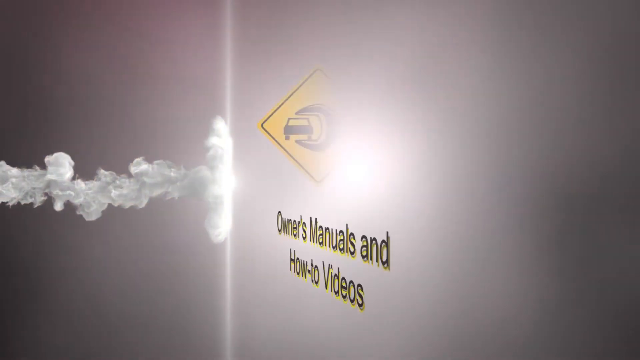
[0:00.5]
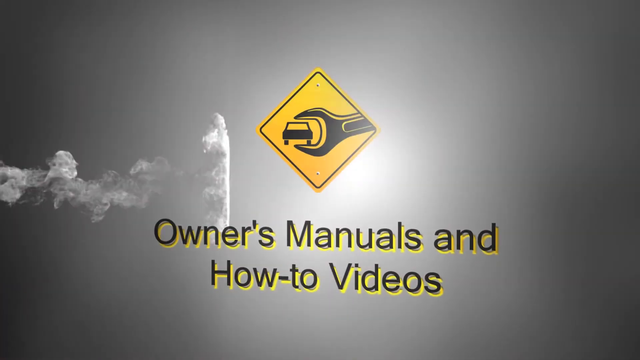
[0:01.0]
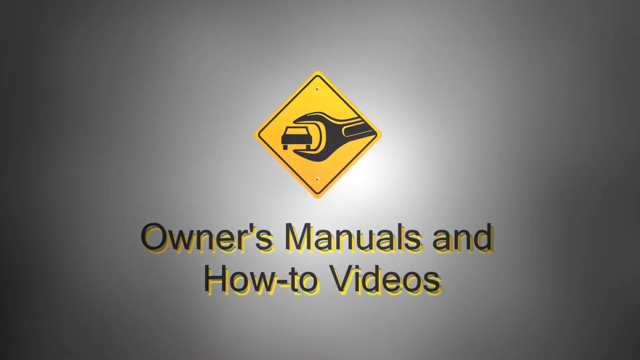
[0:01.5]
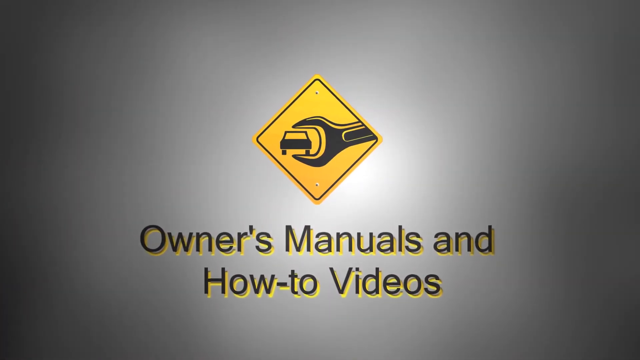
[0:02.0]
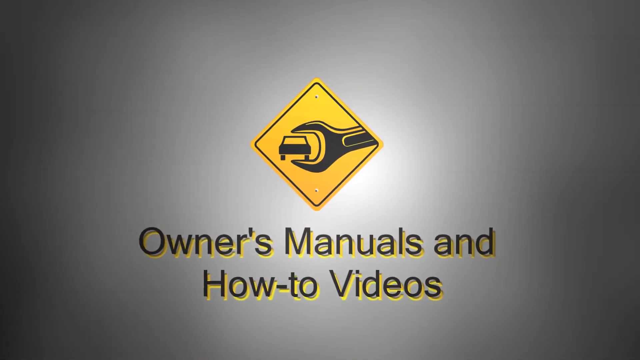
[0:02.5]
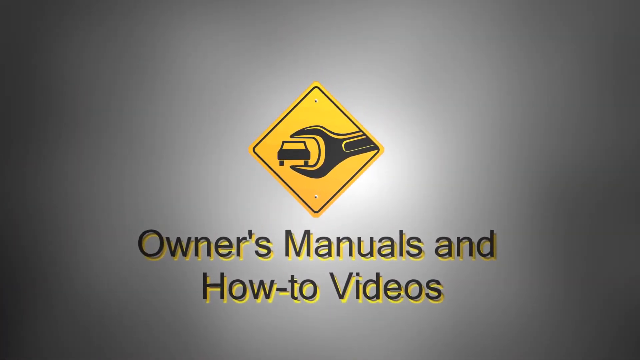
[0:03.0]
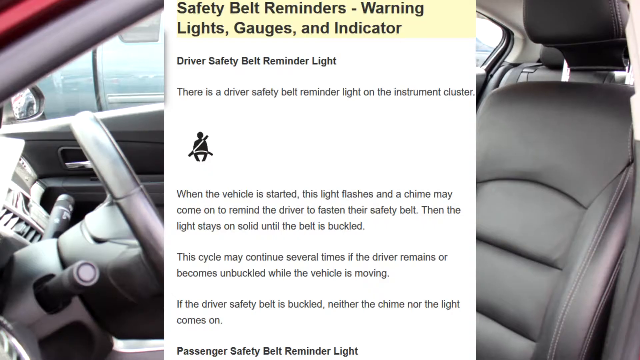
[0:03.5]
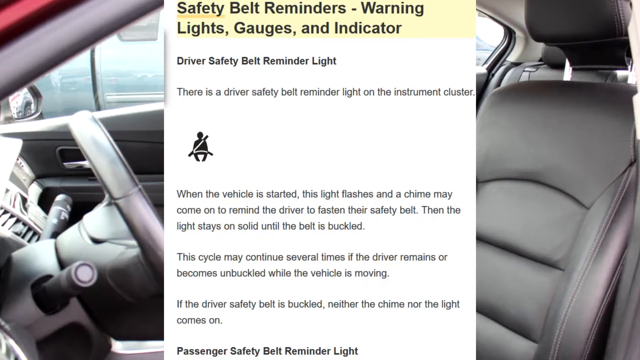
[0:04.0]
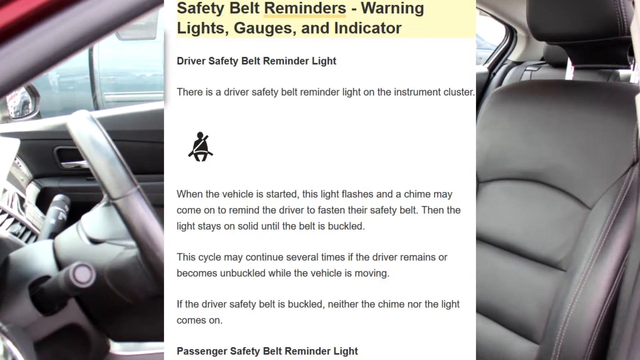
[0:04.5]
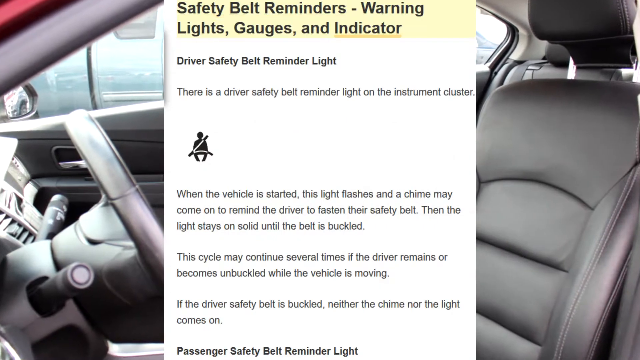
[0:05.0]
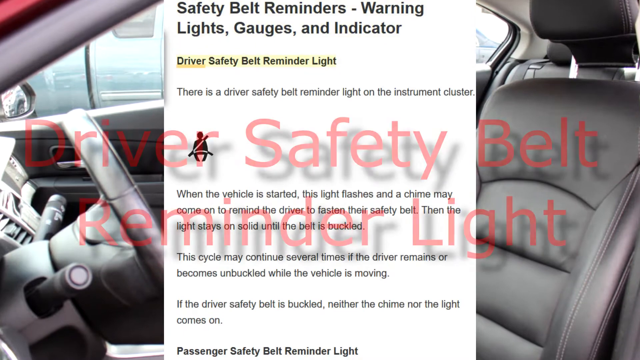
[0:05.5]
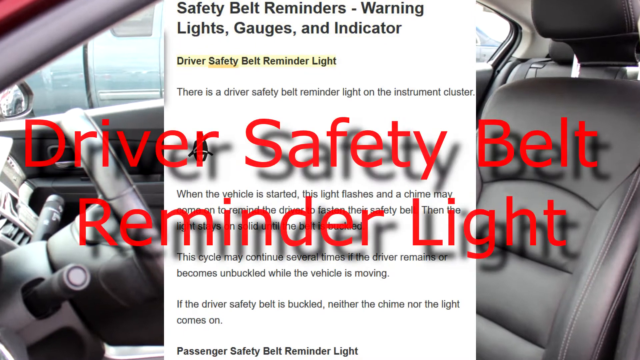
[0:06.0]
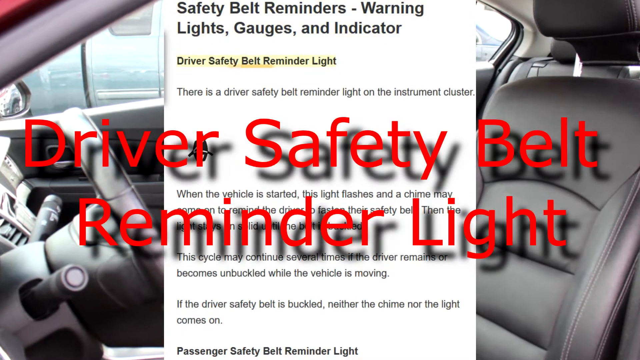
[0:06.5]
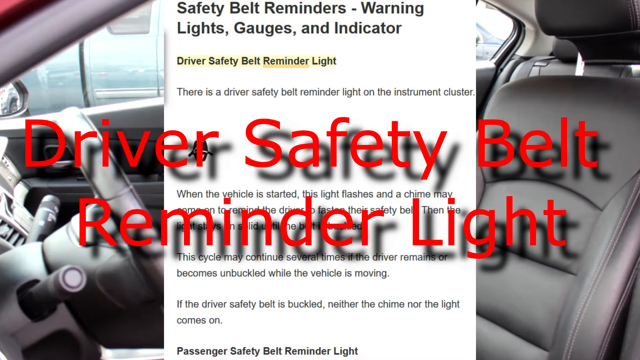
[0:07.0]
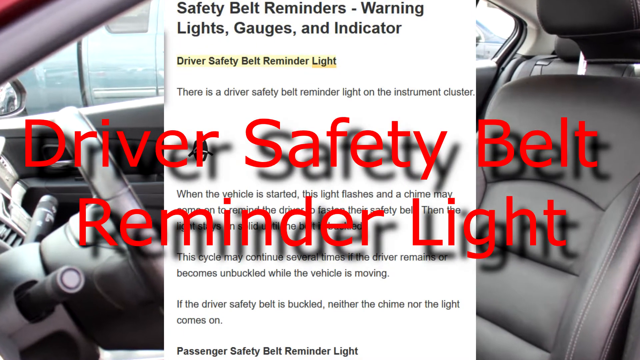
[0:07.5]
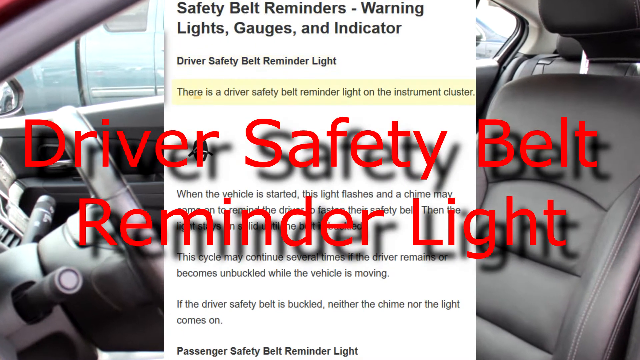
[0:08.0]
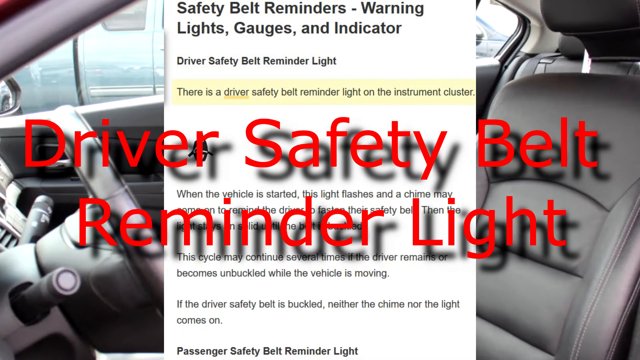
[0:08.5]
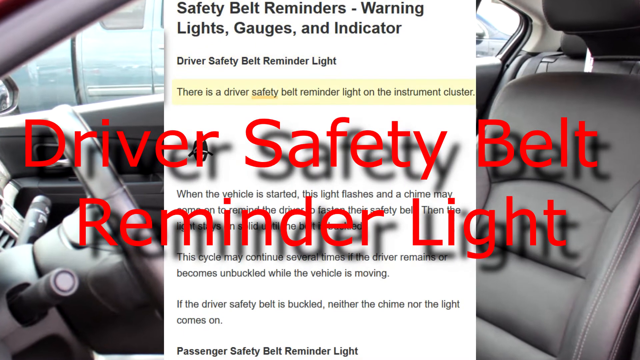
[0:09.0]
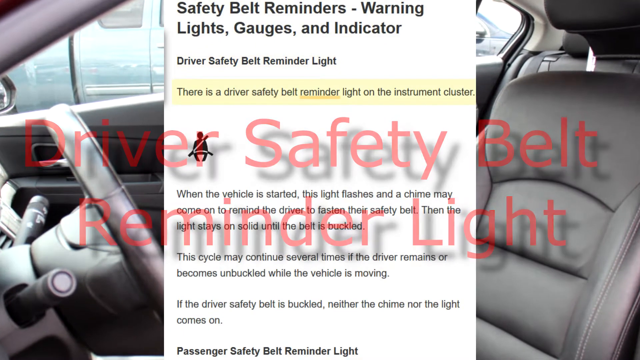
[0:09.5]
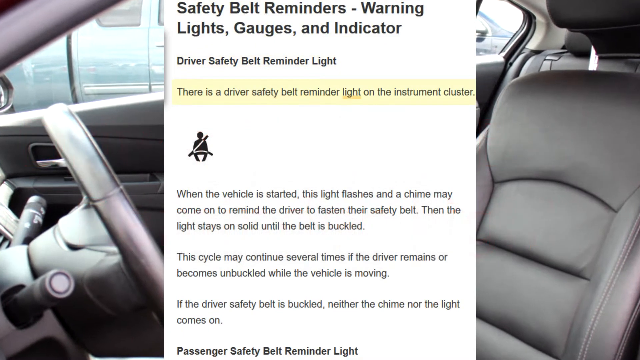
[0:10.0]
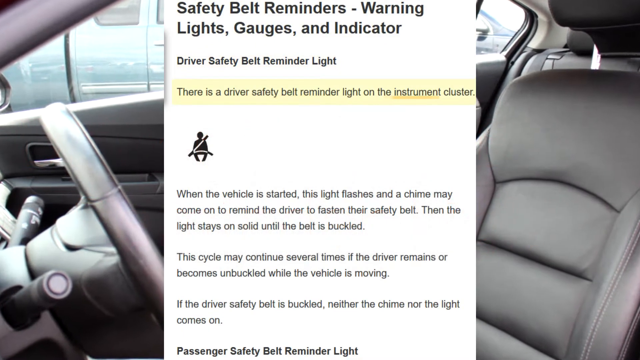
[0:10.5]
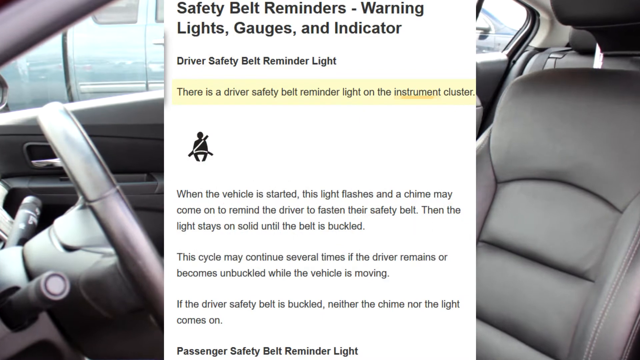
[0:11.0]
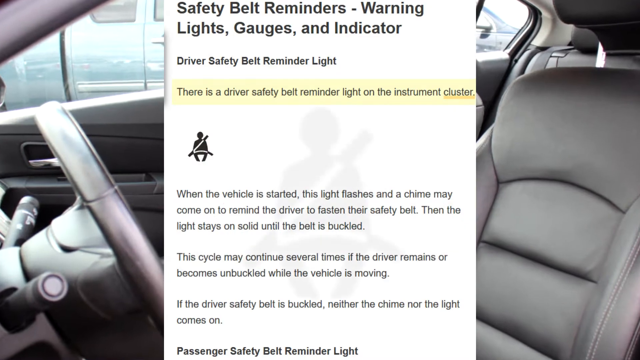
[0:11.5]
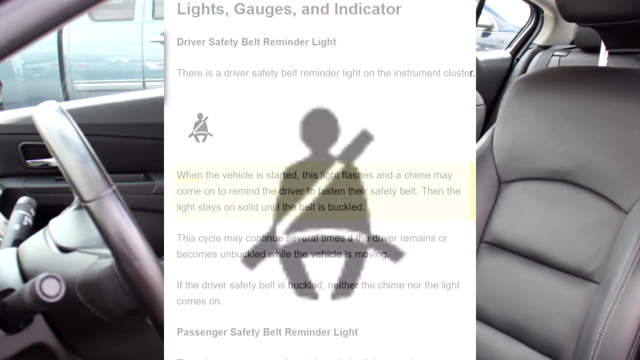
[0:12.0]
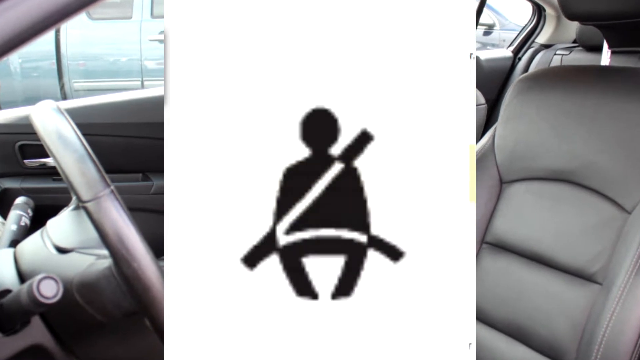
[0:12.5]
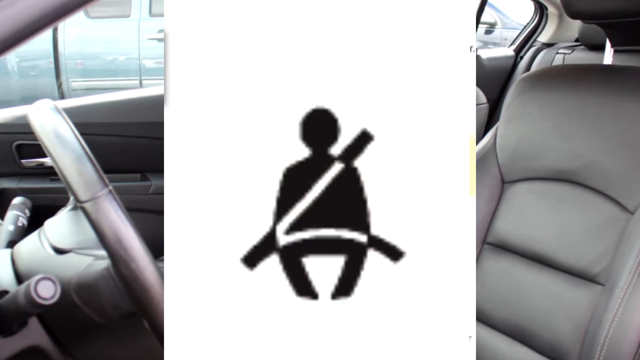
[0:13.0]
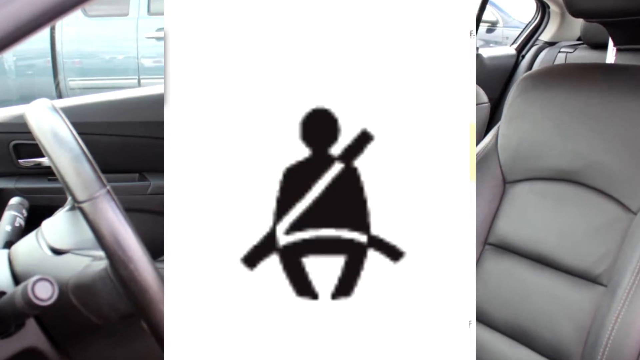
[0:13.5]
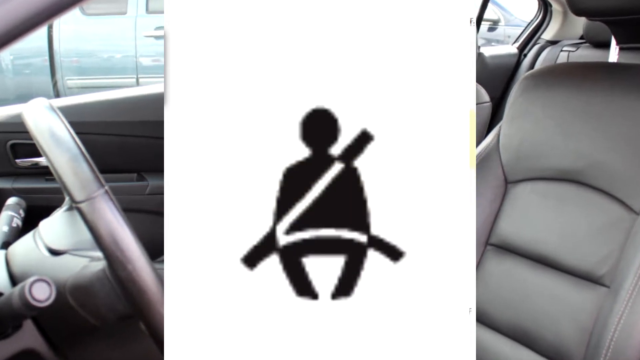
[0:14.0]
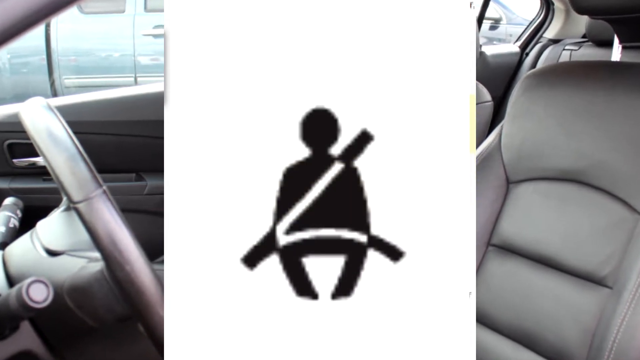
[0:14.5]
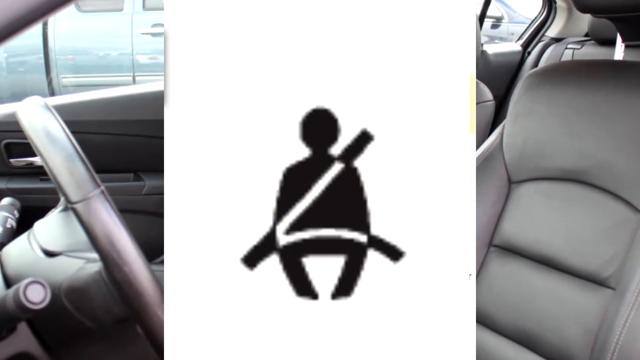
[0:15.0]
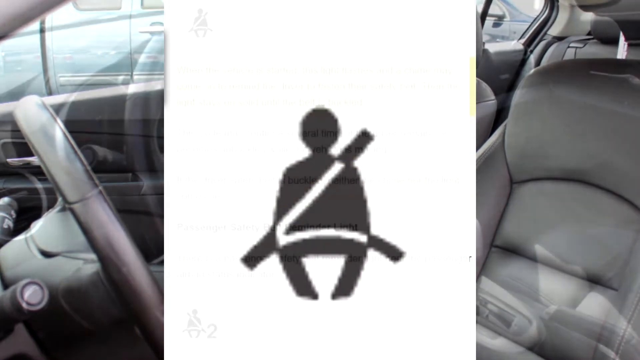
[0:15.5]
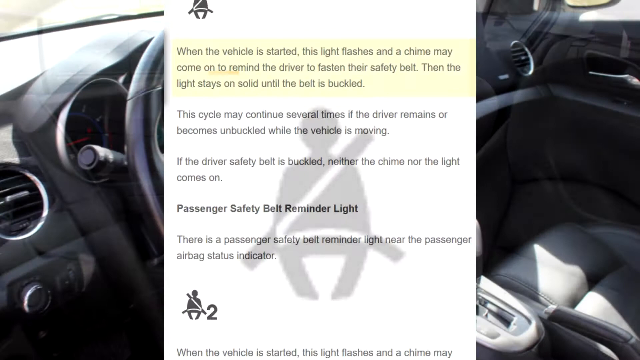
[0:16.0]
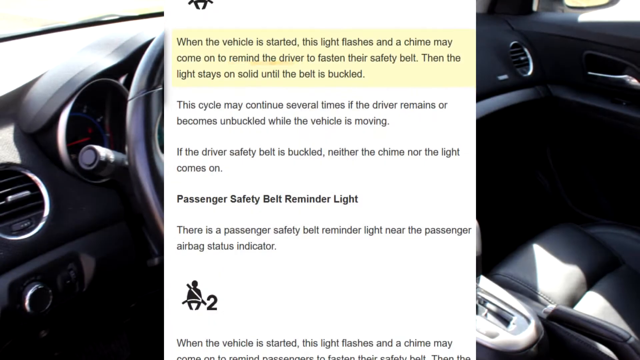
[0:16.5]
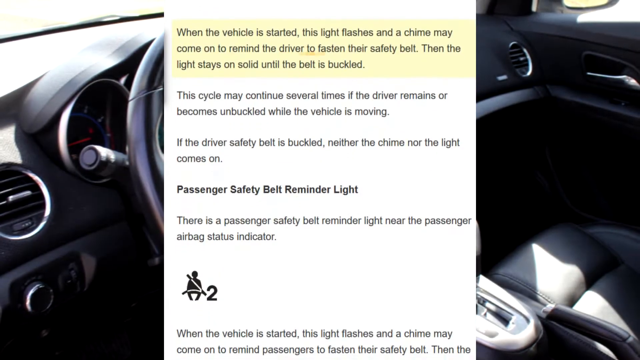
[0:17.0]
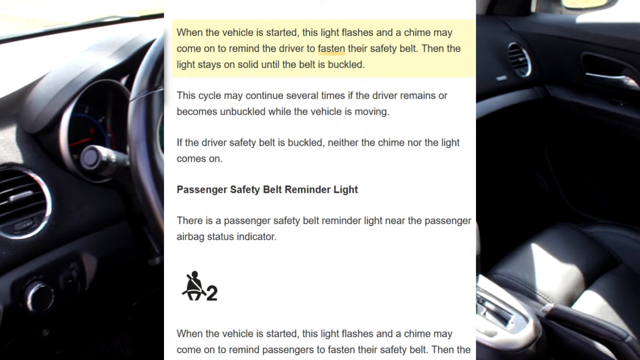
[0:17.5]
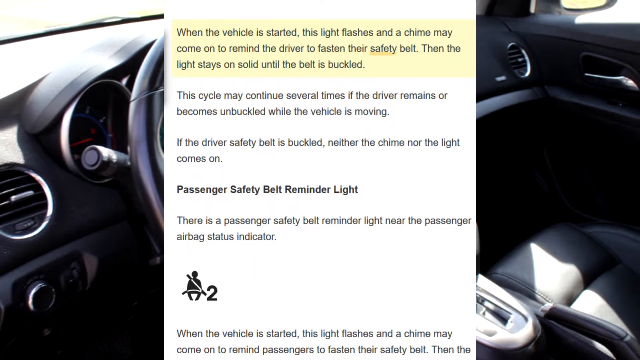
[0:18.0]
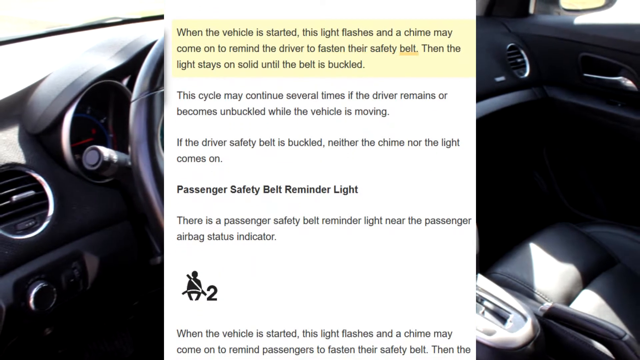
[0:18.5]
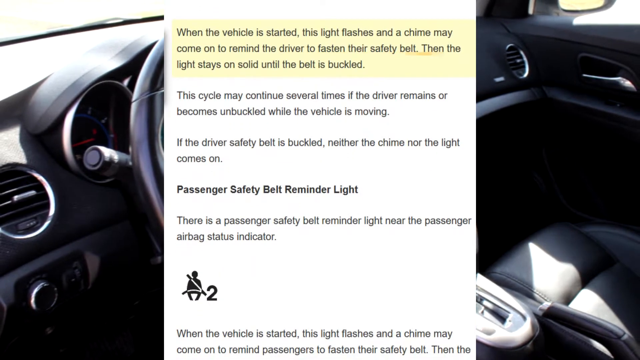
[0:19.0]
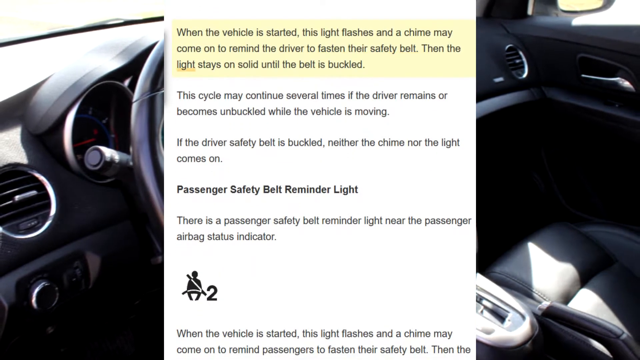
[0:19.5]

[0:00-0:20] The video opens on a silver background with a yellow and black sign showing a wrench and a car. Below it, black and yellow text reads "owner's manuals and how-to videos." Next, a background of a car's interior appears, including the steering wheel and the driver's seat. A page reads "safety belt reminders, warning lights, gauges, and indicator," with black text below. Much larger red text then appears on the screen, reading "driver safety belt reminder light." The center portion of the screen changes to something like a diagram: a black silhouetted icon of a person with a seatbelt across them. The white page changes again to a couple of sentences of black text, and a section titled "passenger safety belt reminder light" is shown in the center.